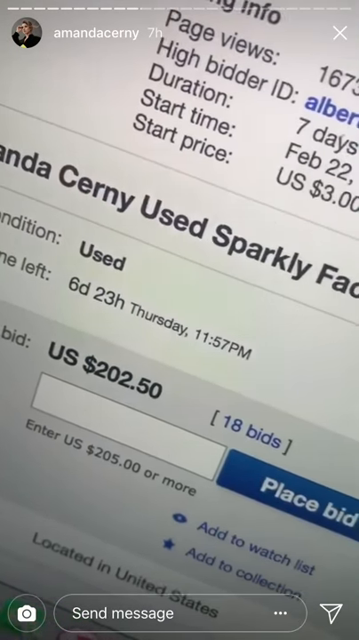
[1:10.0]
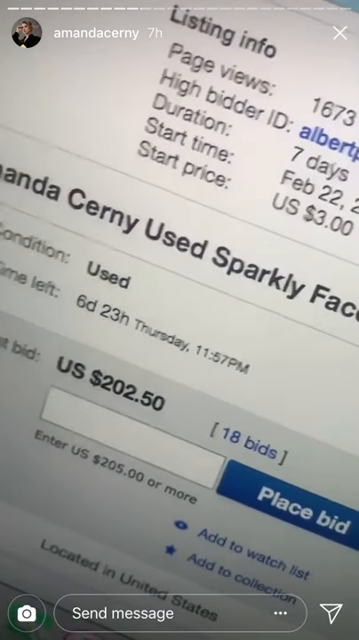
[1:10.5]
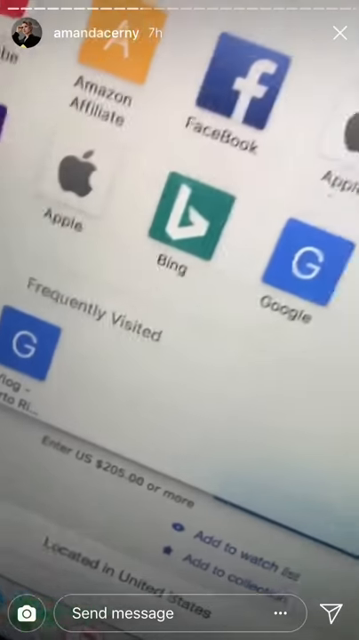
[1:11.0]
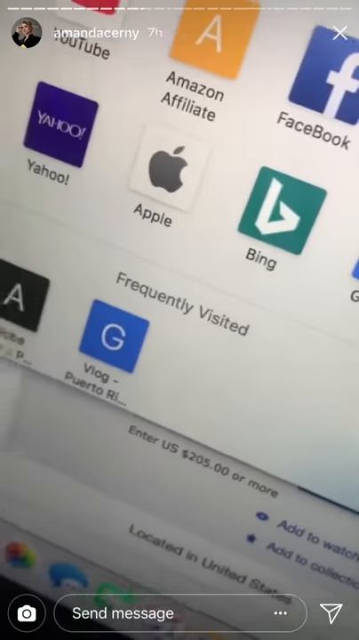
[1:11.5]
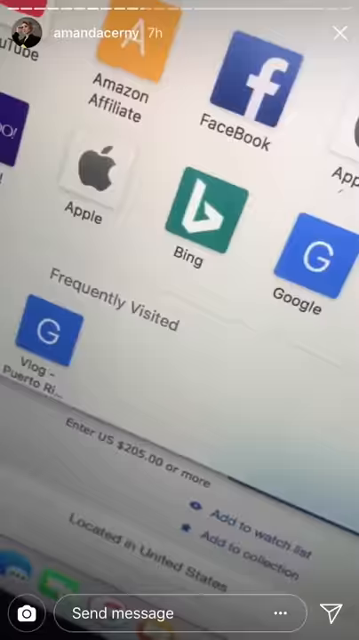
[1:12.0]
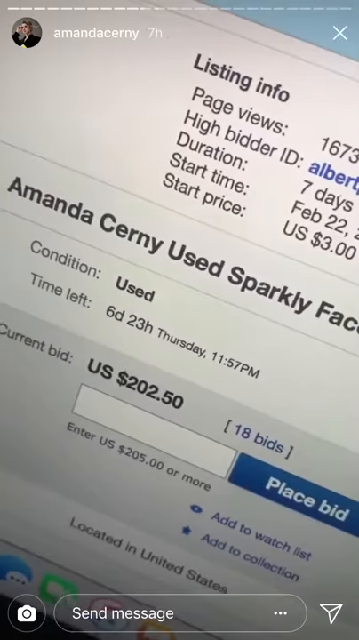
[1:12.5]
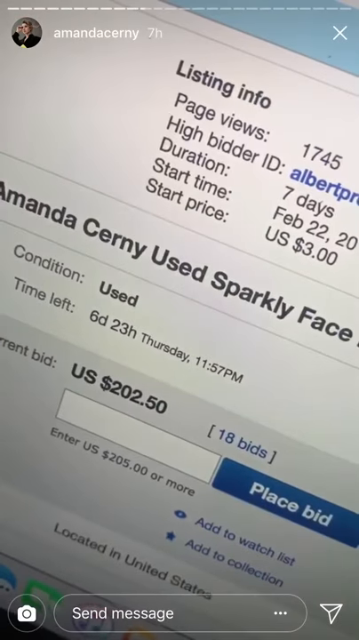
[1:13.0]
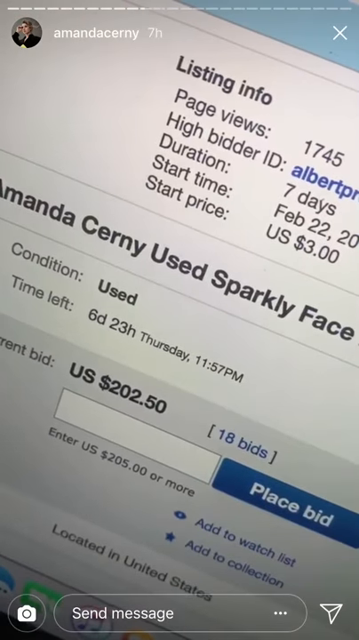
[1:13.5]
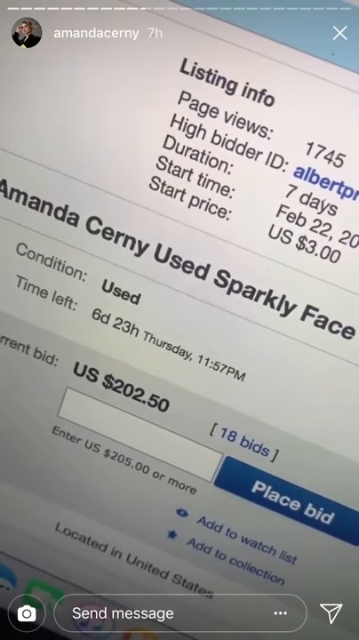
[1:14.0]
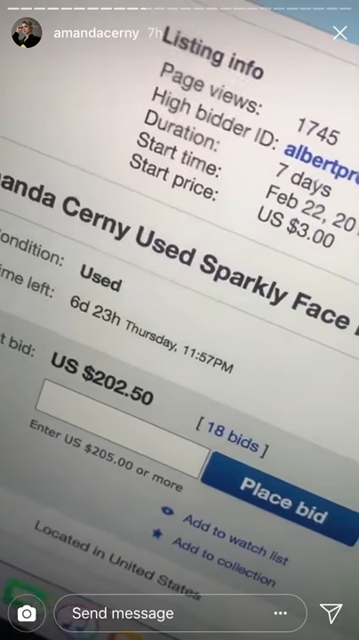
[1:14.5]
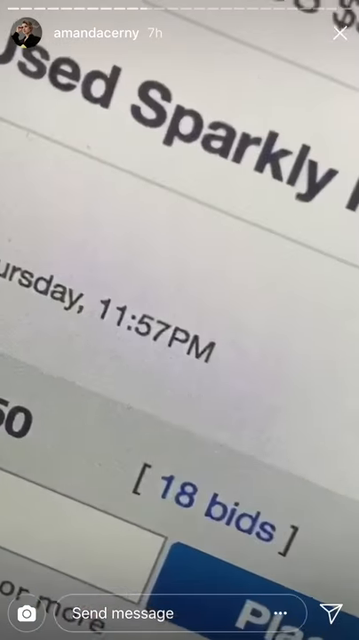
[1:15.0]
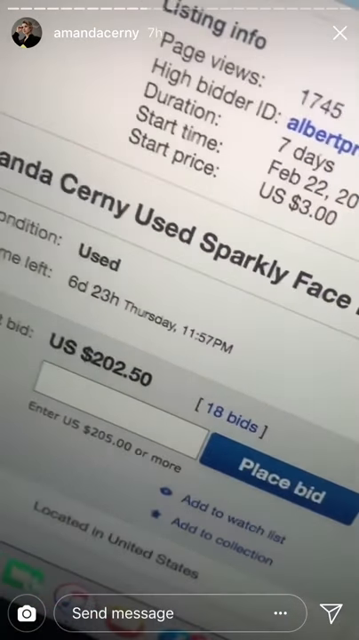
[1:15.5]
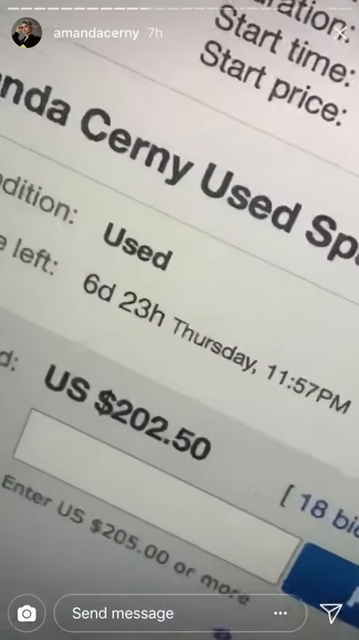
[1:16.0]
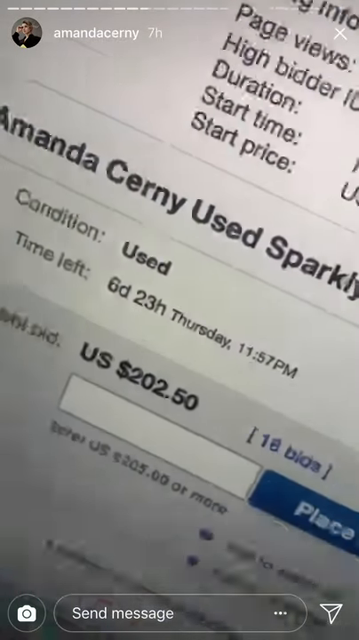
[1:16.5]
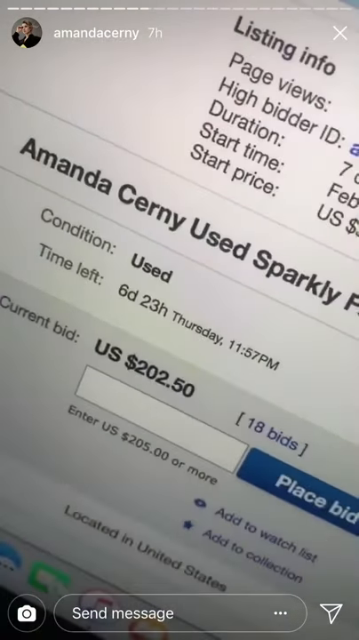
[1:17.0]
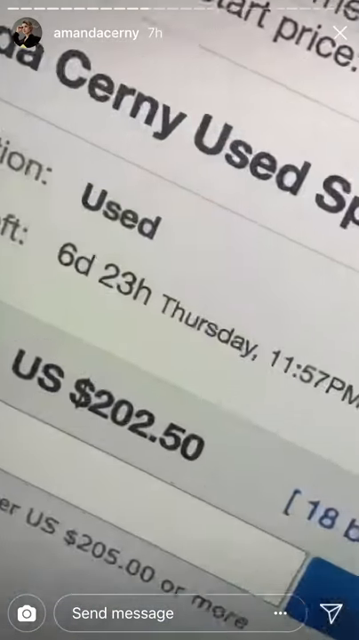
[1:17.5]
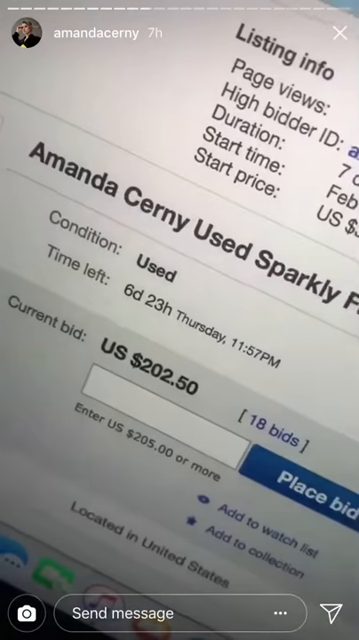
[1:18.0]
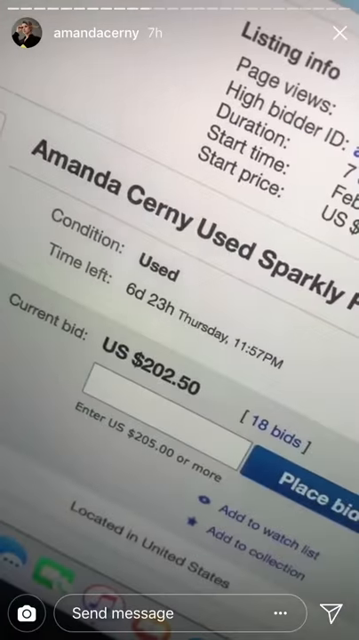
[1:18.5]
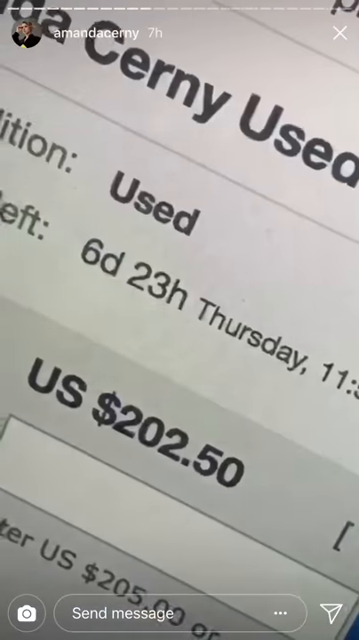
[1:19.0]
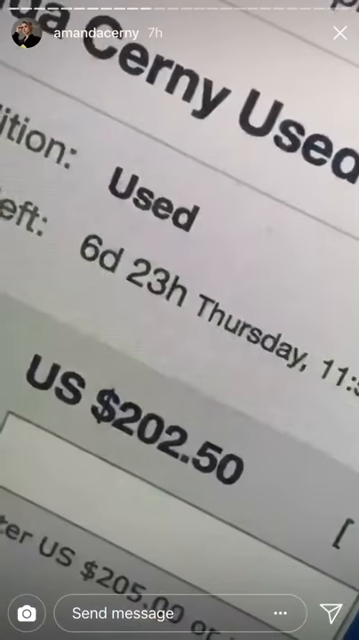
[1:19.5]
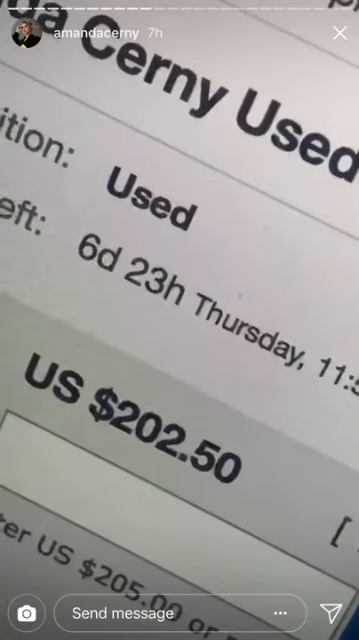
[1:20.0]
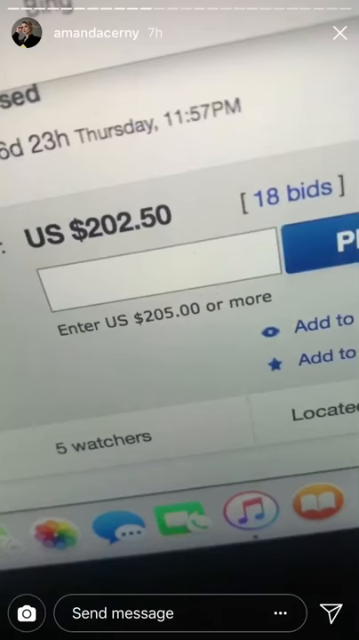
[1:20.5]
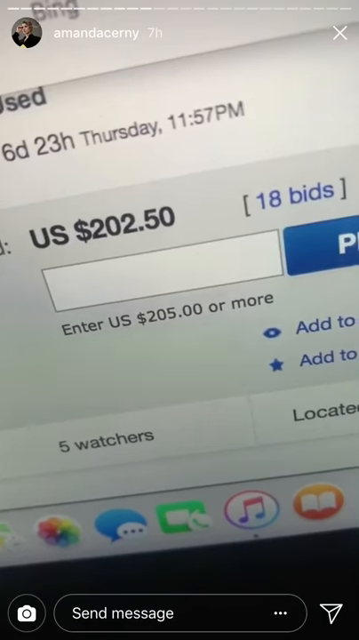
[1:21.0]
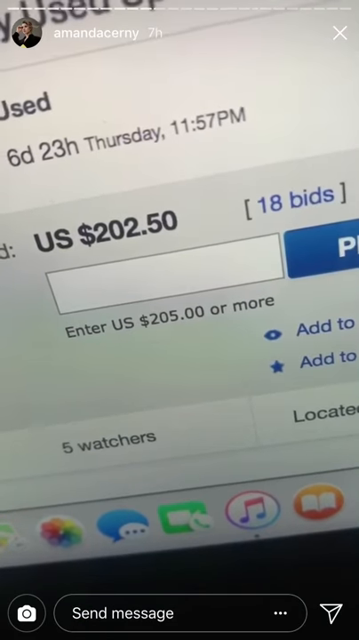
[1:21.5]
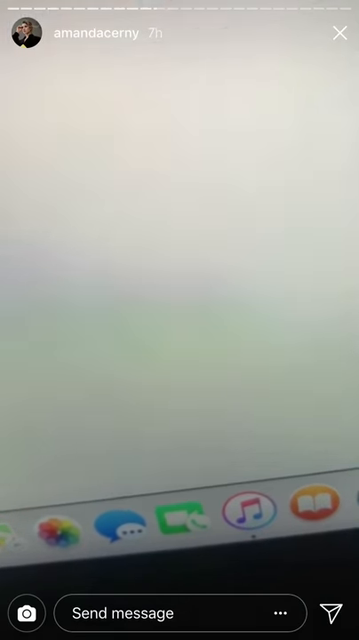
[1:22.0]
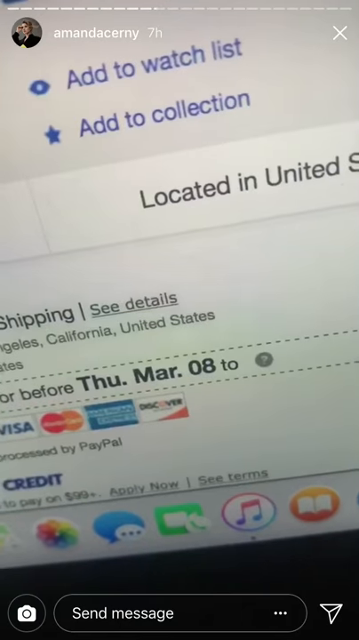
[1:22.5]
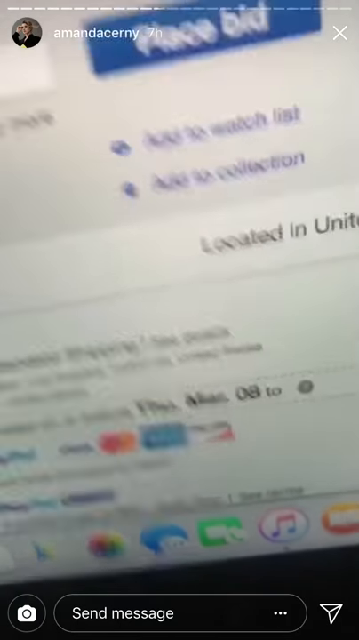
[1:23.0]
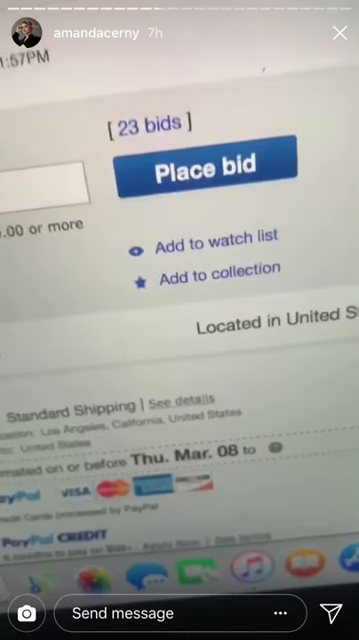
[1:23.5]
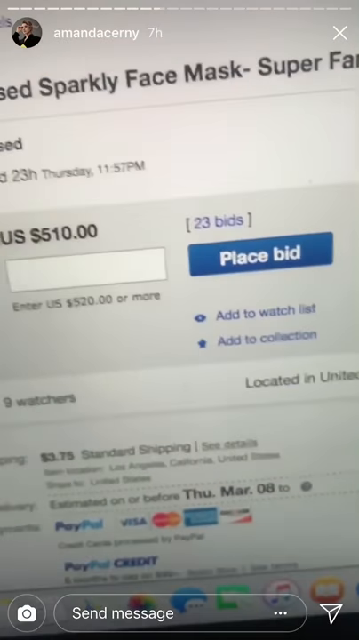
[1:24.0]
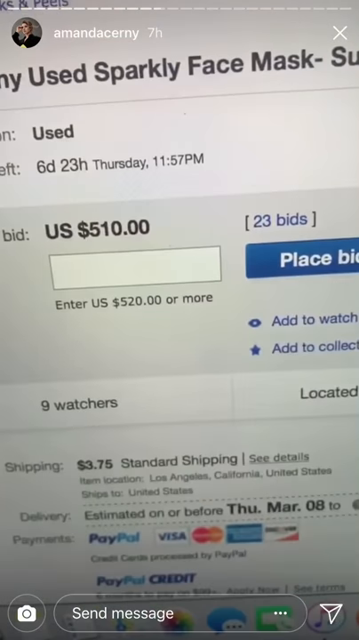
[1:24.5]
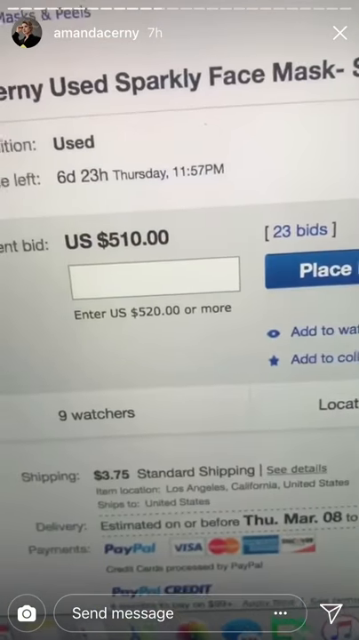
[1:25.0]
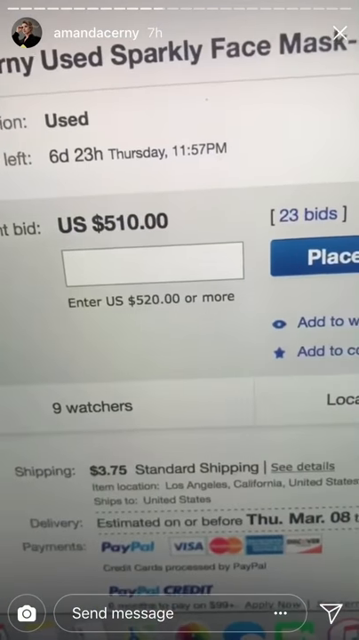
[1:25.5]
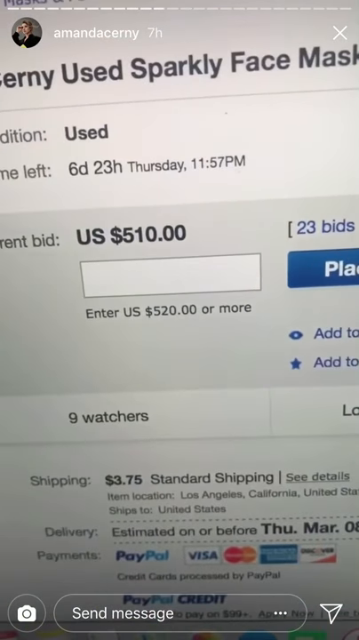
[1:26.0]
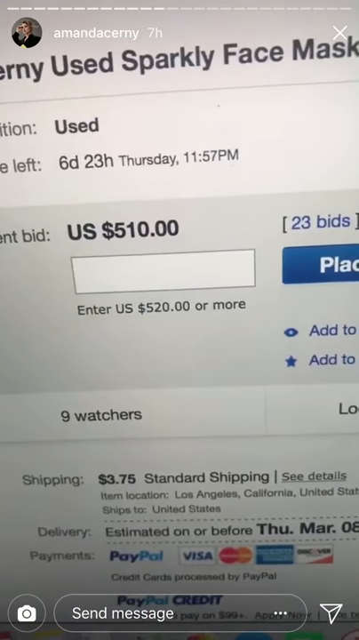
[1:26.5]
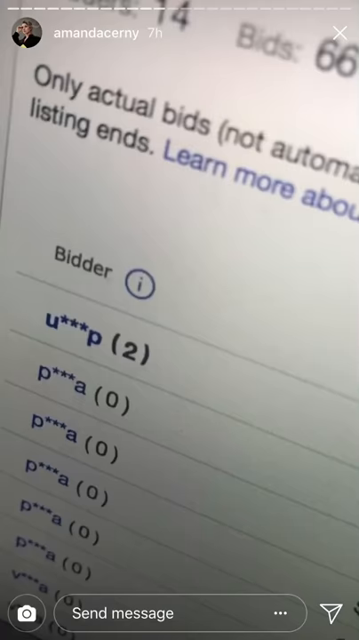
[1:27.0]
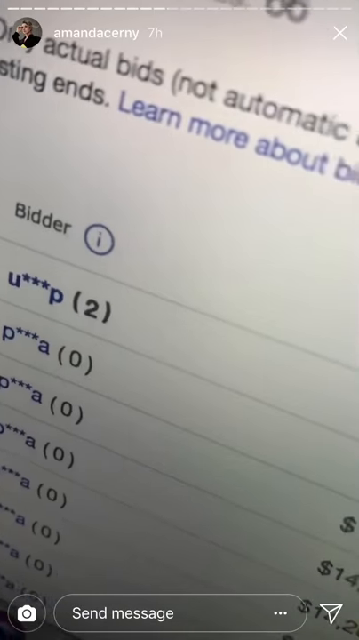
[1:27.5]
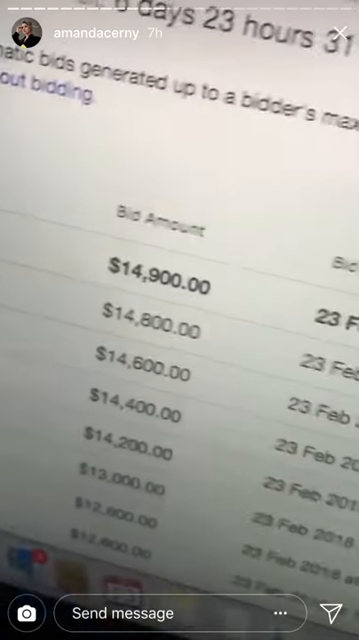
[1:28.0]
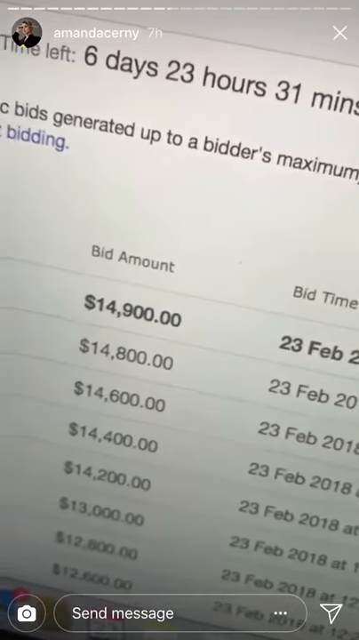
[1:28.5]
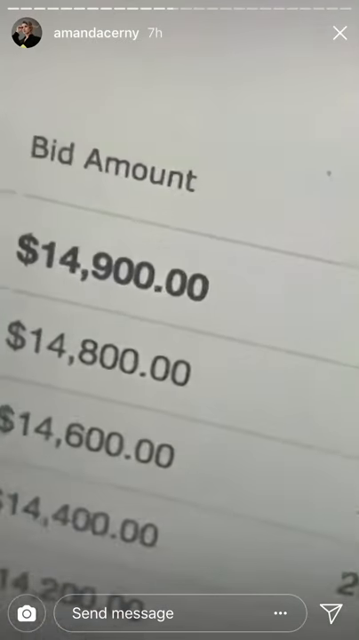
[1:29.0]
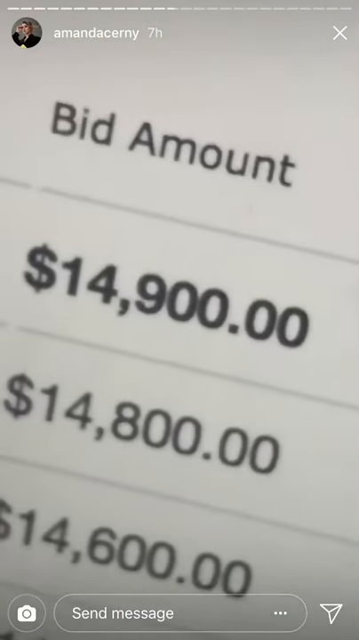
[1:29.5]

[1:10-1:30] An Instagram story displays a laptop screen showing the account of Amanda Cerny. The eBay page on the laptop shows 1,673 page views, a duration of seven days, a start time of February 22 and a start price of US $3. The video shows the amount so far, US $202.50, with 18 bids placed. It zooms in and out on the text "place bid". It then changes to show five watches and where they are located, followed by the payment methods: PayPal, Visa, Mastercard and American Express. The video zooms in on the watches, then shows the amounts that have been bid, with the highest at $14,800.